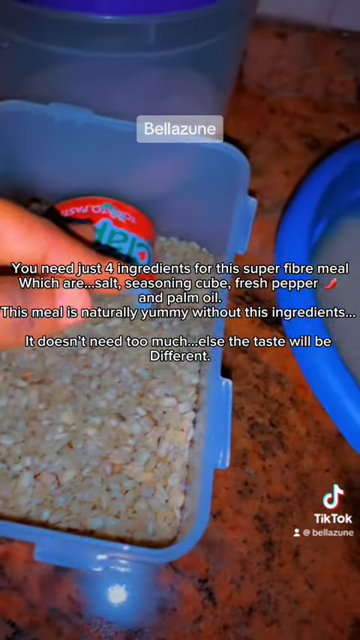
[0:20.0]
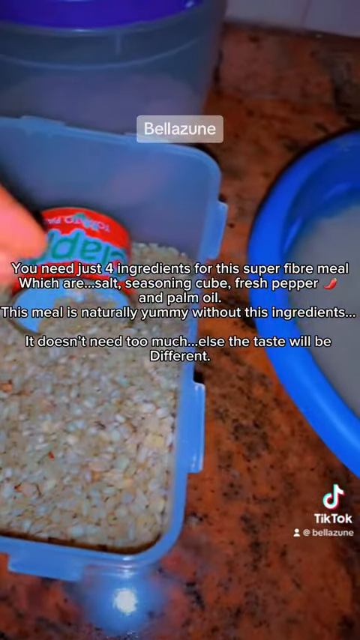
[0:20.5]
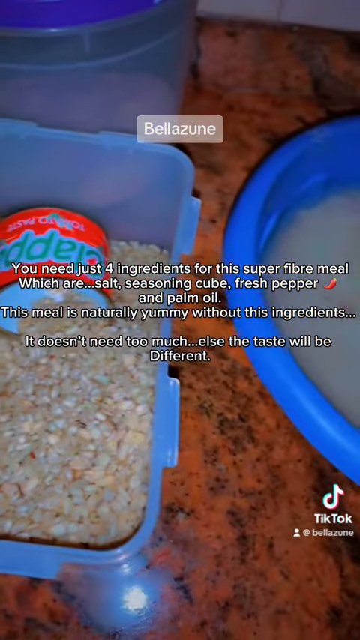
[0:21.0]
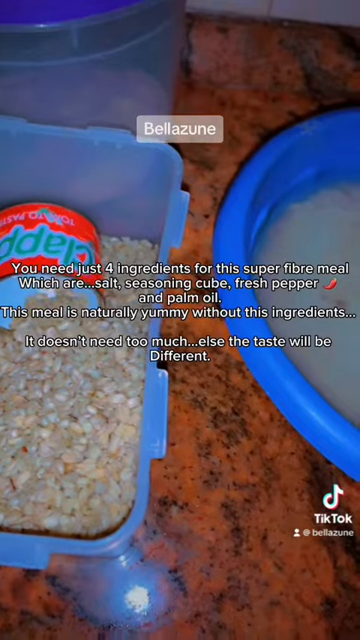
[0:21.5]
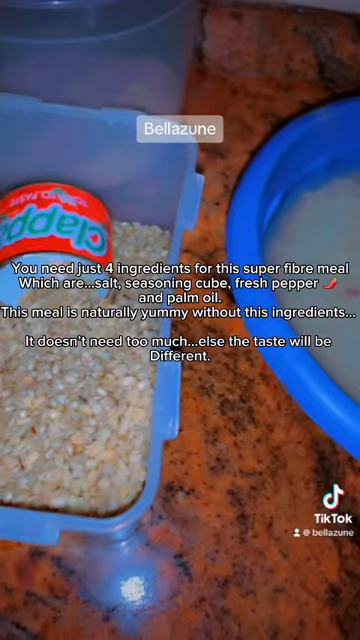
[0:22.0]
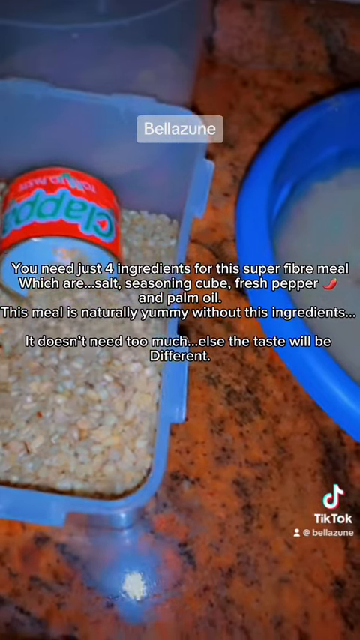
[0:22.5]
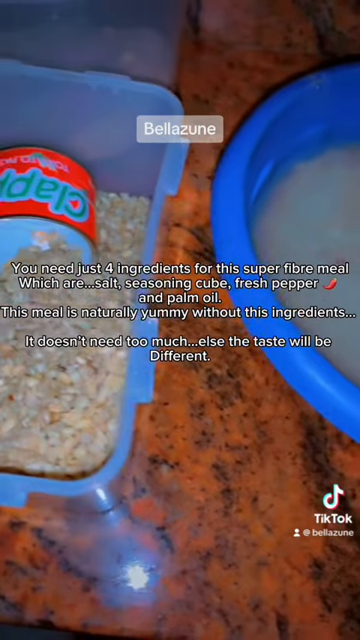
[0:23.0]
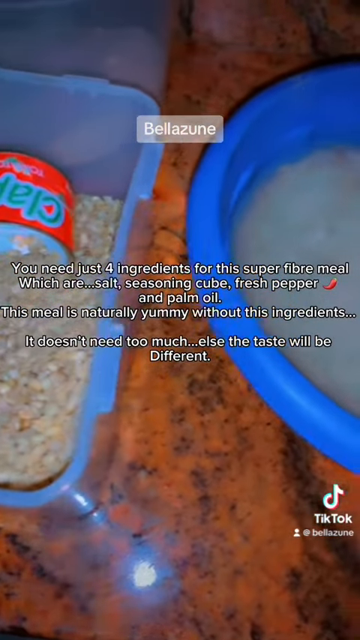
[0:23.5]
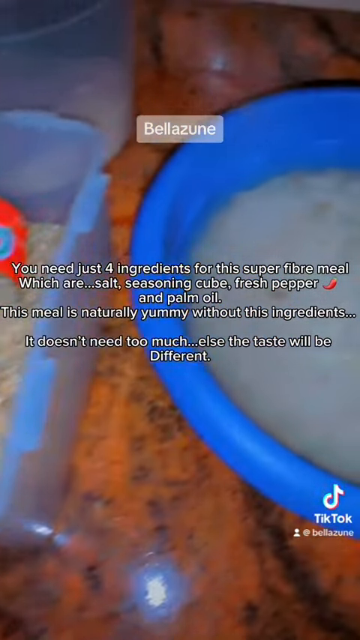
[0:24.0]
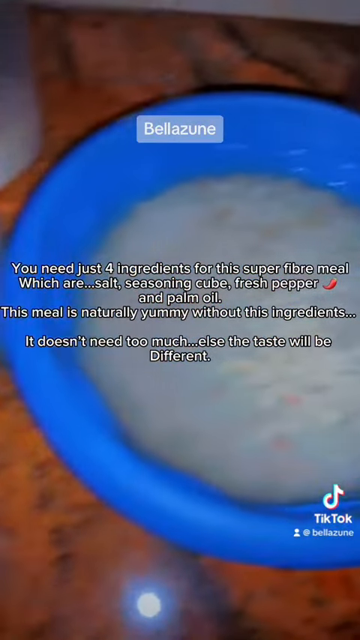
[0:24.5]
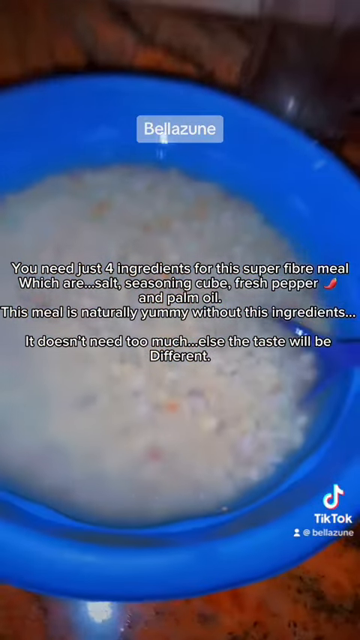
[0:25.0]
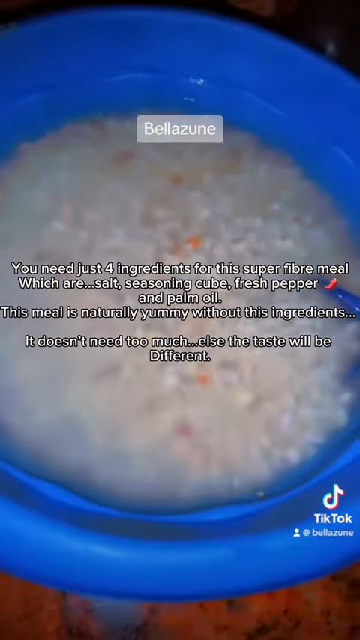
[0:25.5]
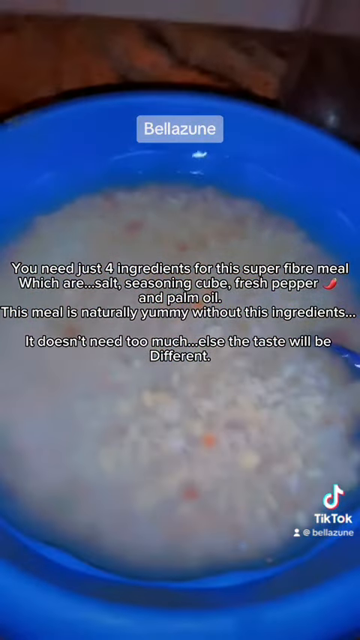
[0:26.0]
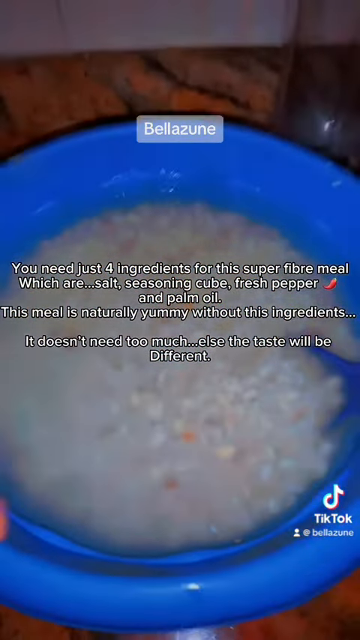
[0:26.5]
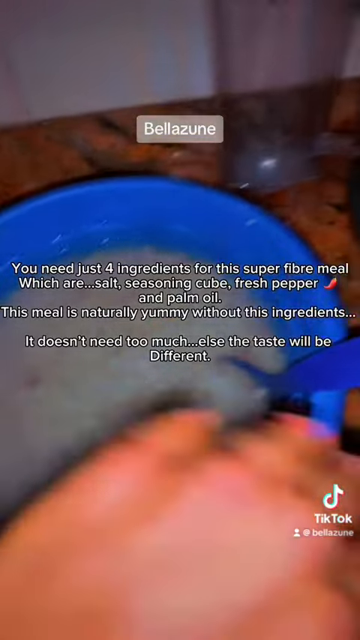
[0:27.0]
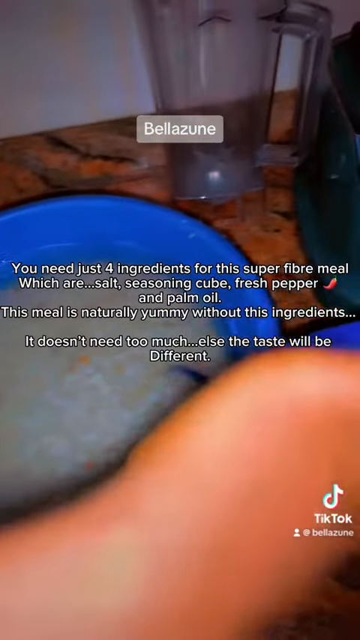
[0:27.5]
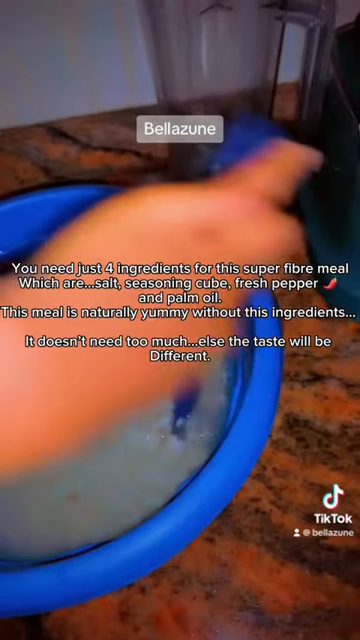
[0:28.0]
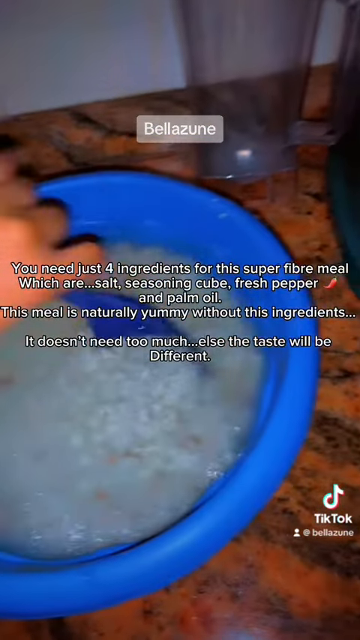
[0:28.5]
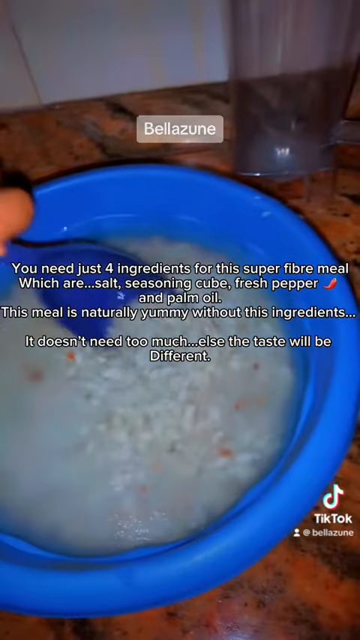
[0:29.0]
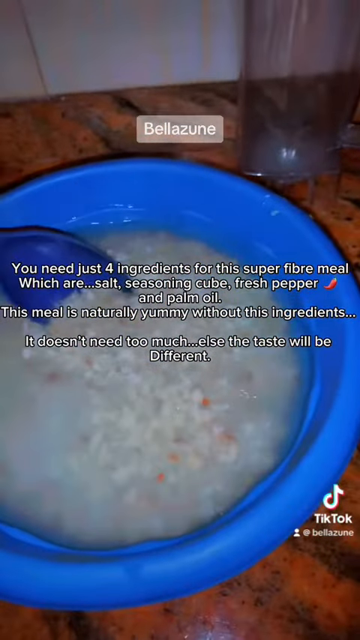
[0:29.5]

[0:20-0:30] The same caption and the same shot continue. The hands come out of the bowl on the left, and the camera moves over to the right-hand bowl, which is very out of focus. It looks like it holds white or grey chopped-up food that appears to be soaking in water. A hand comes in and stirs it all with a spoon held in the person's left hand. The worktop is sort of granite-effect, with dark brown, reddish dark brown and black elements. There is a square storage box on the left that is sort of blue and a round bowl on the right that is also blue. The TikTok logo is now in the bottom right-hand side, reading "TikTok" with a person's profile shape and something like "Bellazune". The camera moves around a little. A storage pot in the background appears to be empty.